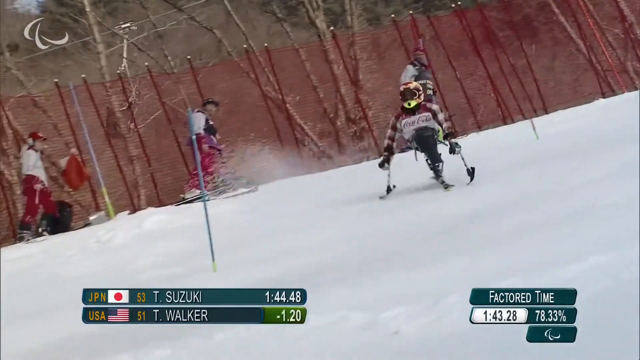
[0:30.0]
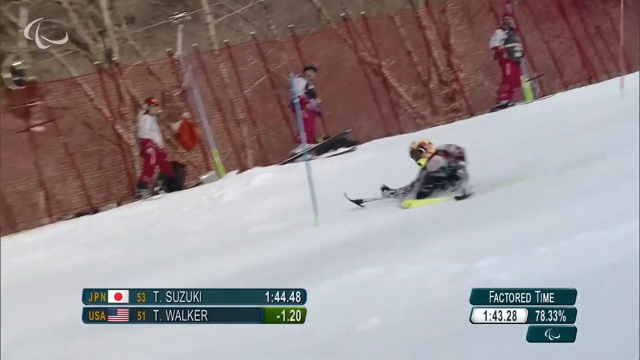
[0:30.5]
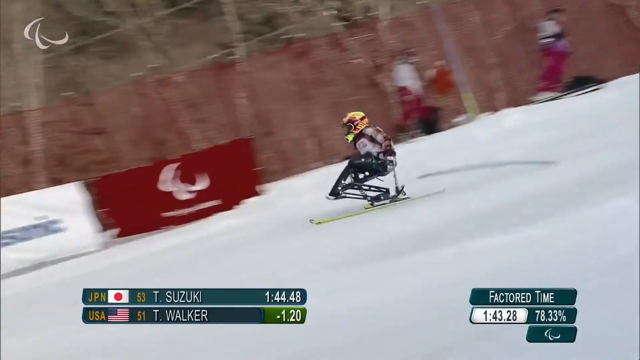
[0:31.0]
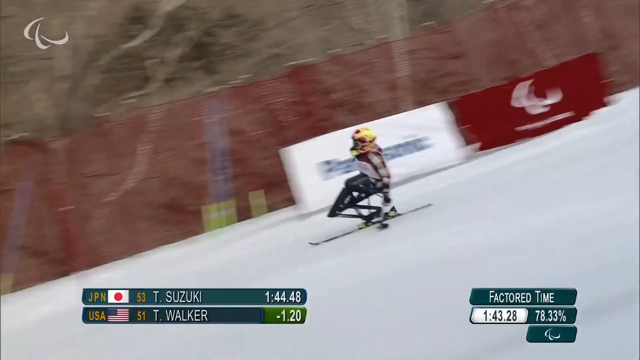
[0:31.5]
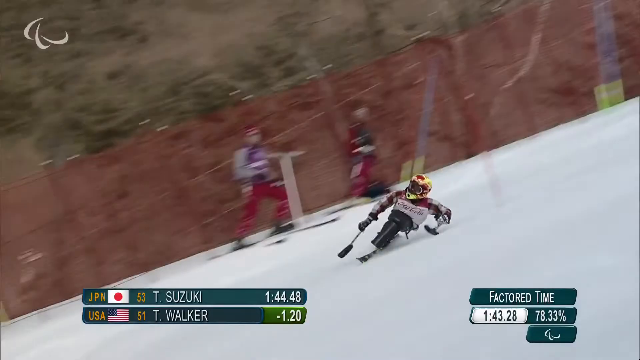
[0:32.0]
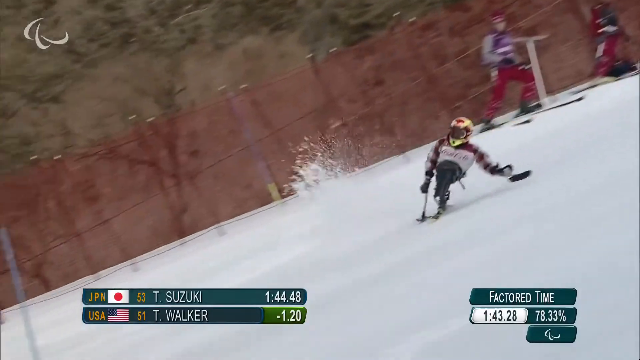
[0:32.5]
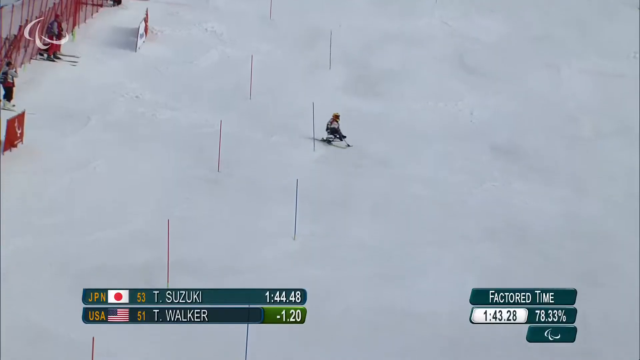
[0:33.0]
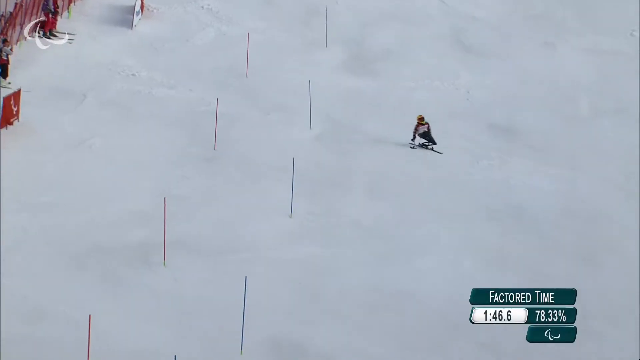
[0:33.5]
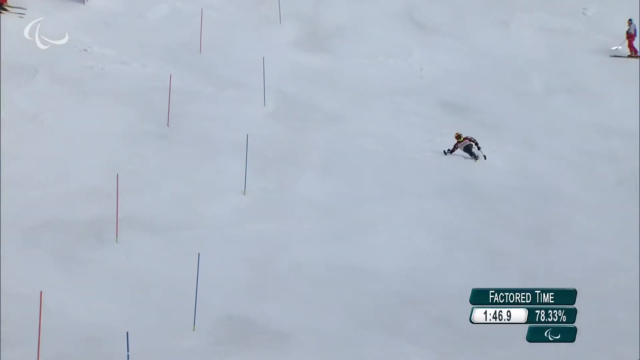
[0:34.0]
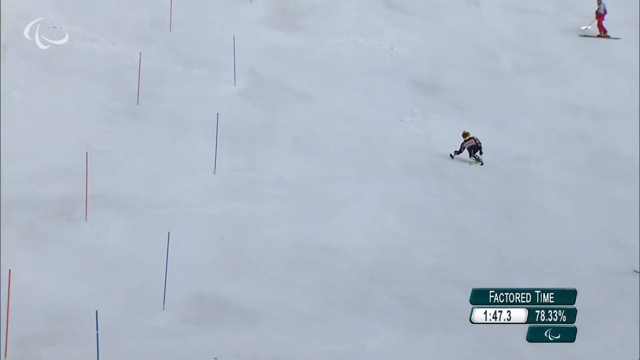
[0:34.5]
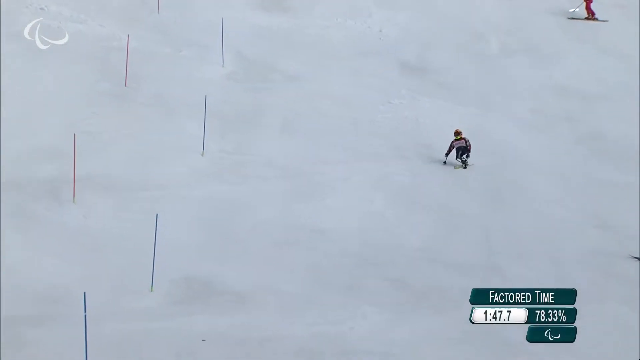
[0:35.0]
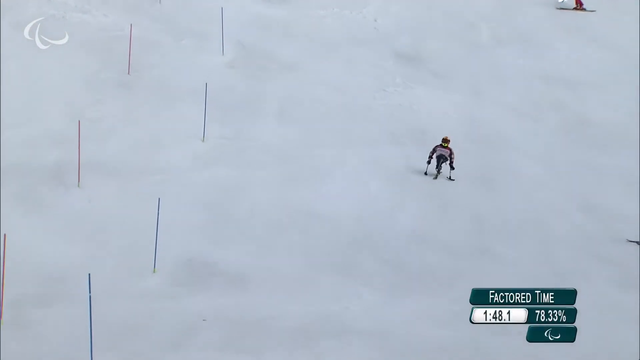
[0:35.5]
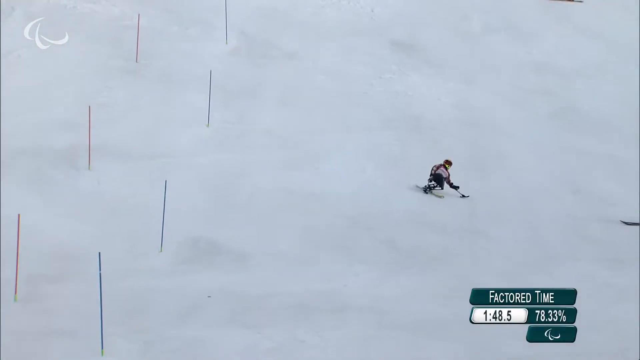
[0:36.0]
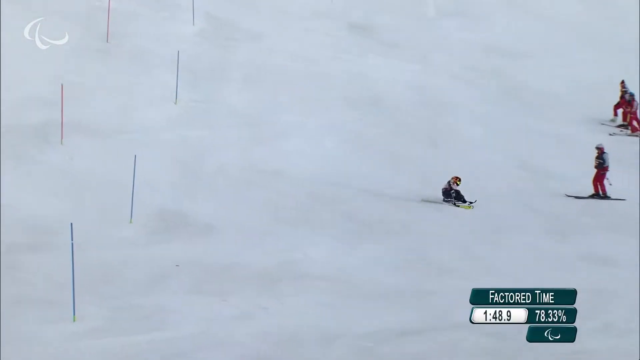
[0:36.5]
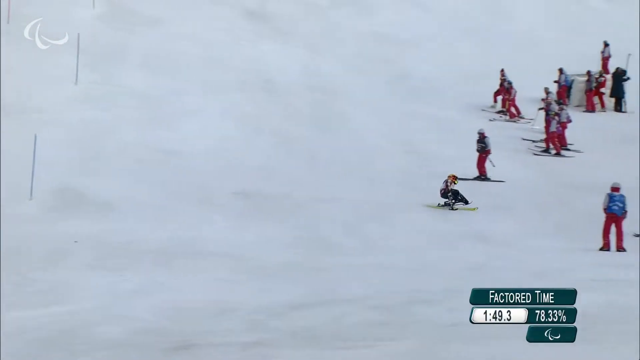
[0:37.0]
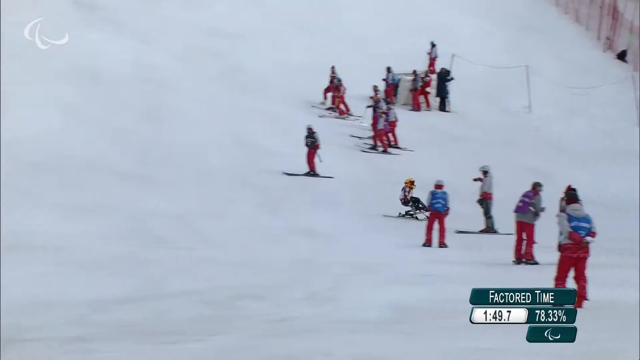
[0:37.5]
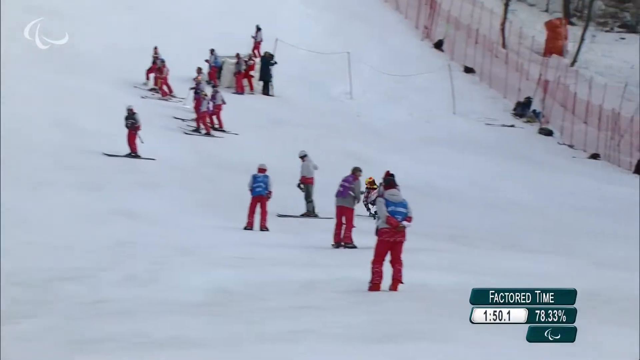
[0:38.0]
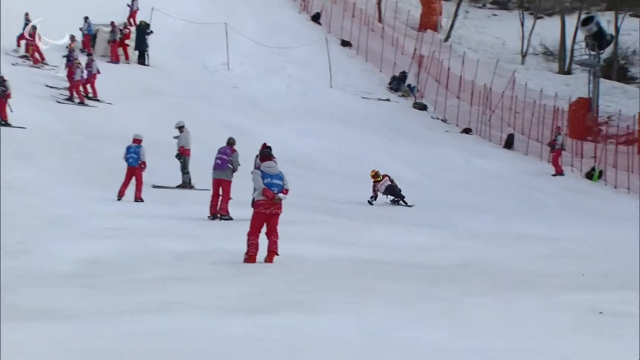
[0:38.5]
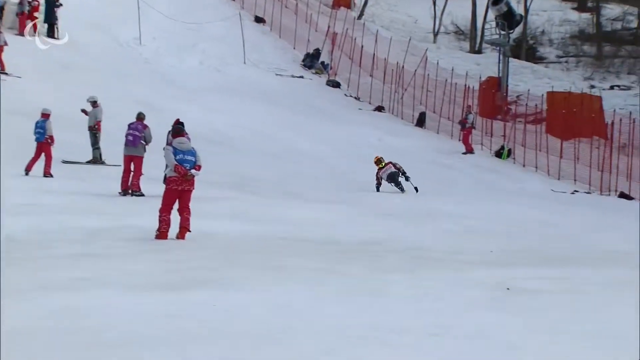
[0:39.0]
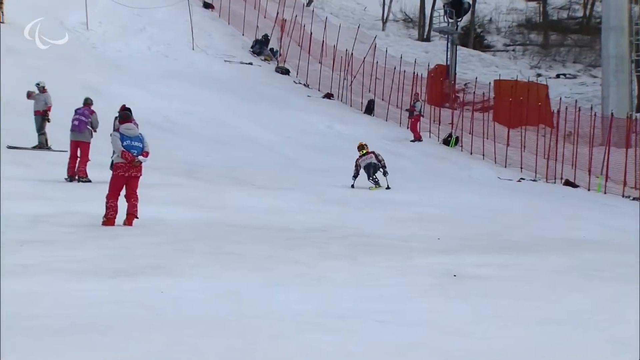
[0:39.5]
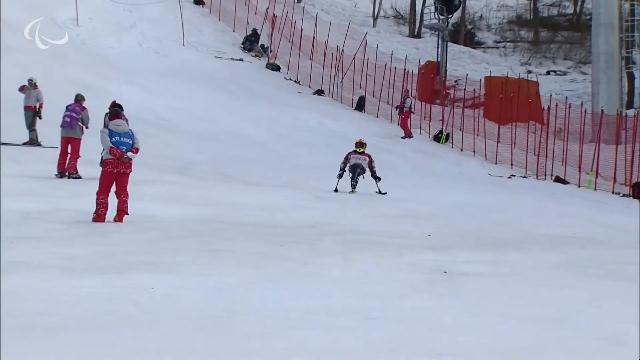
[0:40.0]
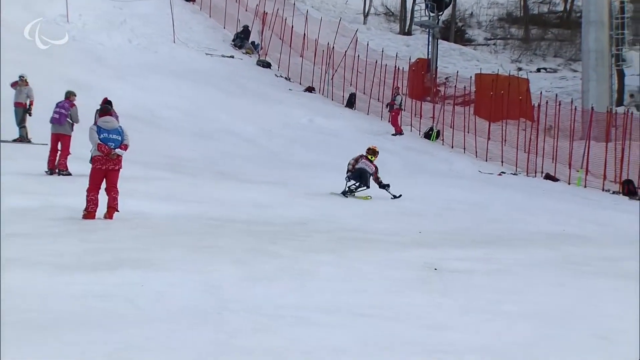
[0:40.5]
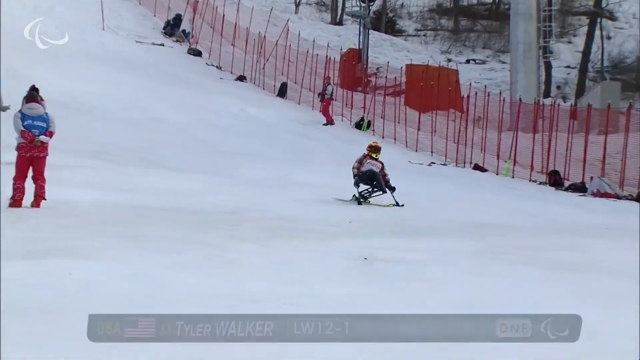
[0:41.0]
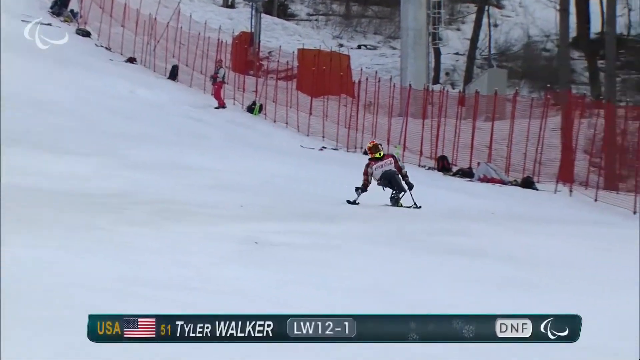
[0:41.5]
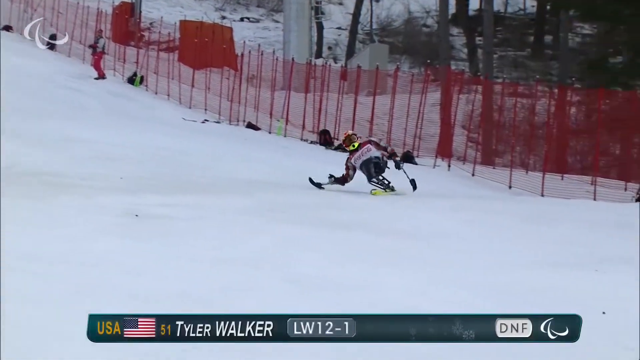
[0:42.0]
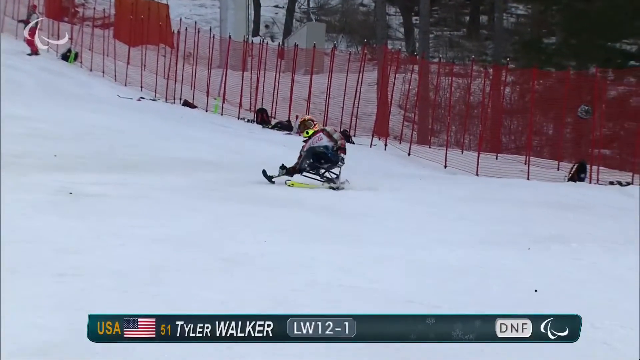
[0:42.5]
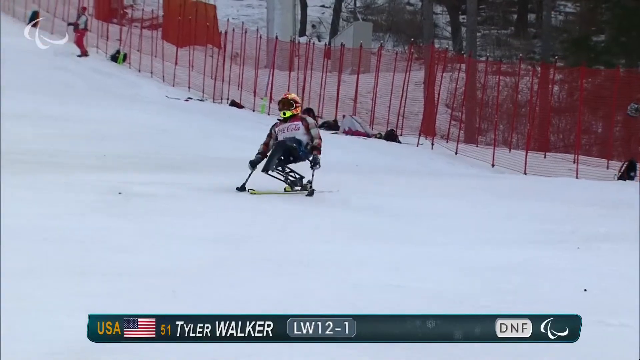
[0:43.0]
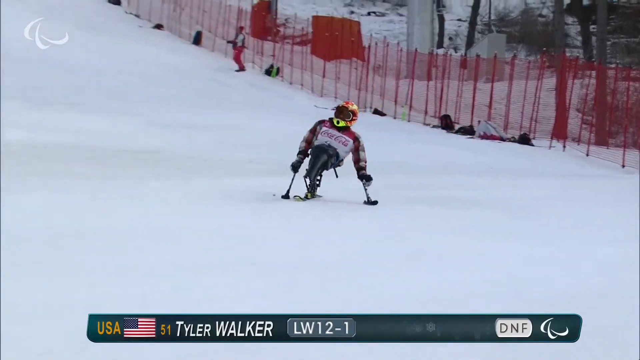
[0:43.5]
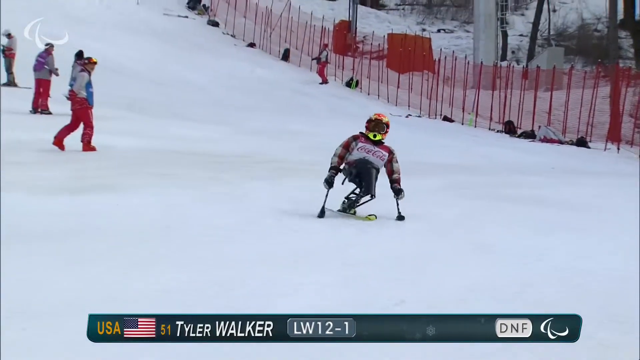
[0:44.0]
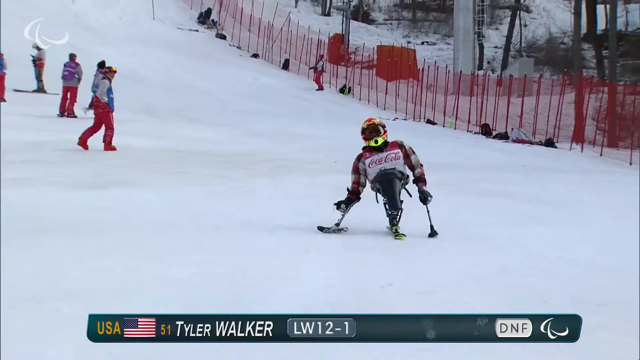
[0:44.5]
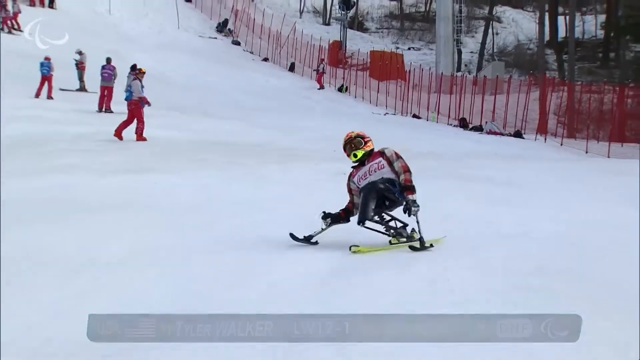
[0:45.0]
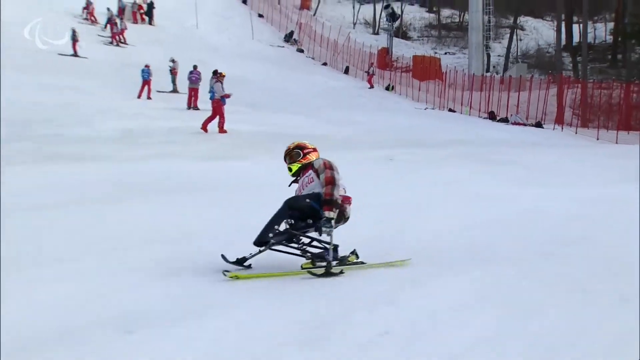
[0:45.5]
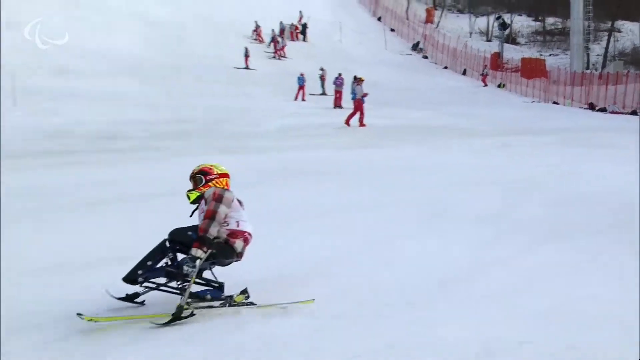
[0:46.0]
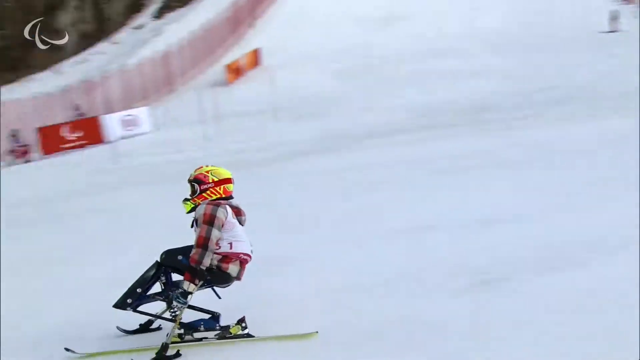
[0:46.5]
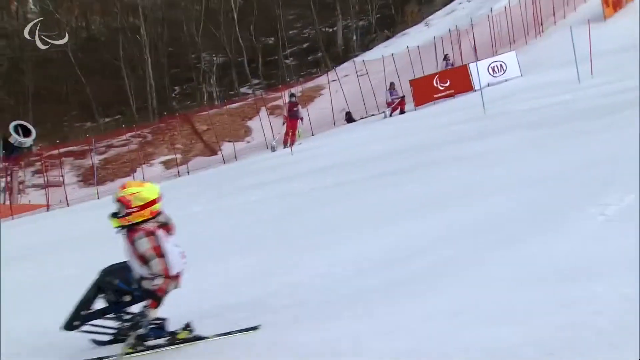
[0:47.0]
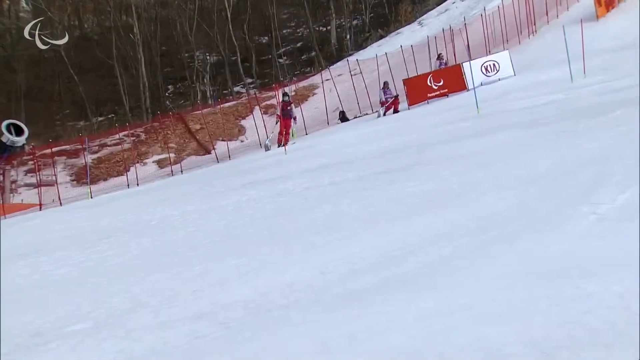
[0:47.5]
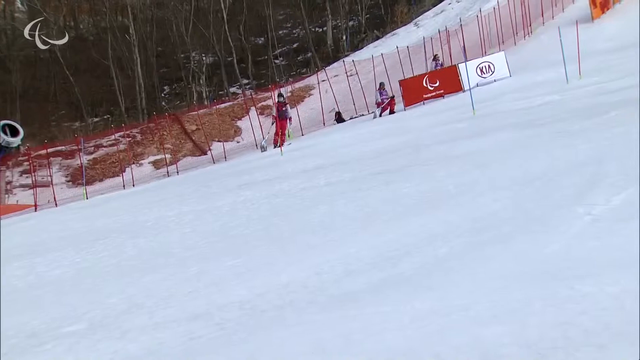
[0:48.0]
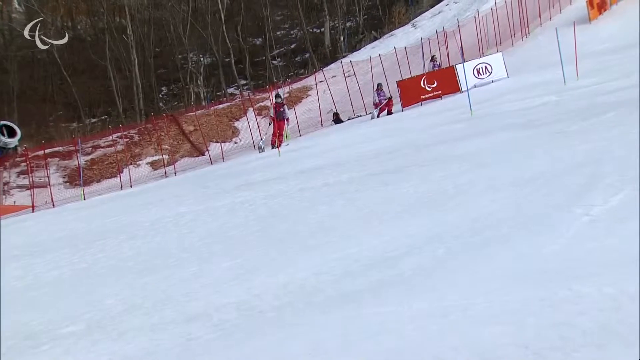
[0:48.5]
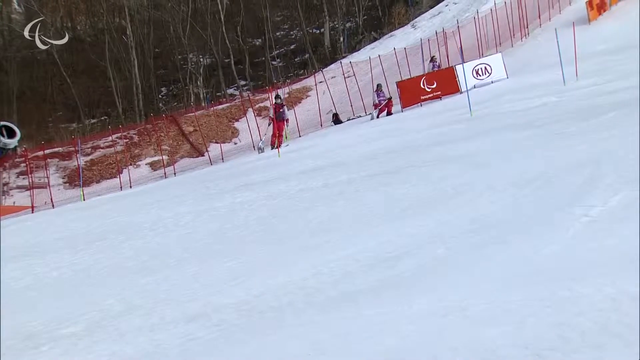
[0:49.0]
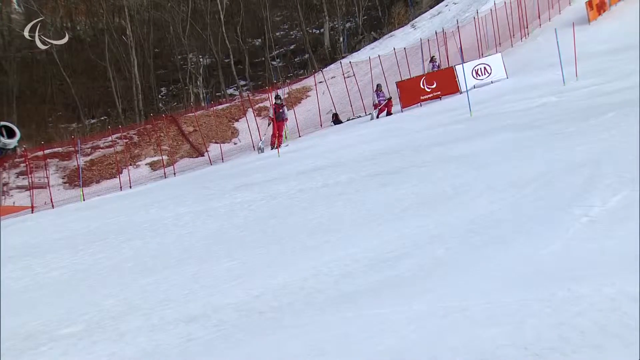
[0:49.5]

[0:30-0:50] What looks like a downhill ski race in the Paralympics continues. The skier uses poles in their hands and one ski at the base, and appears possibly to be using a prosthetic. Along the bottom of the screen is their factored time, 1.4320, along with skiers from Japan, T. Suzuki, and from the U.S., T. Walker. The skier goes through the course avoiding poles, goes out of the course, and skis down until finally slowing at the bottom of the hill as they come off the course. Ads for Kia are beside them, and spectators line the edges of the course. The poles on the course are red and blue, and there is red netting on the edges.